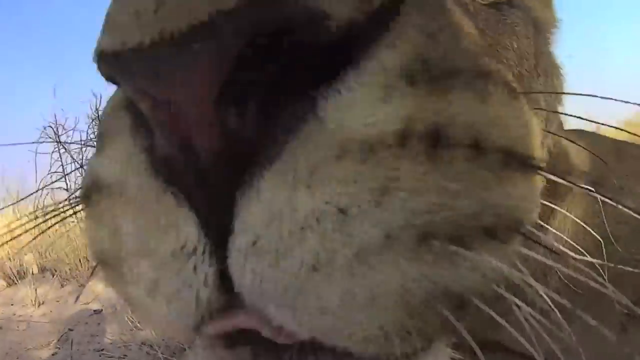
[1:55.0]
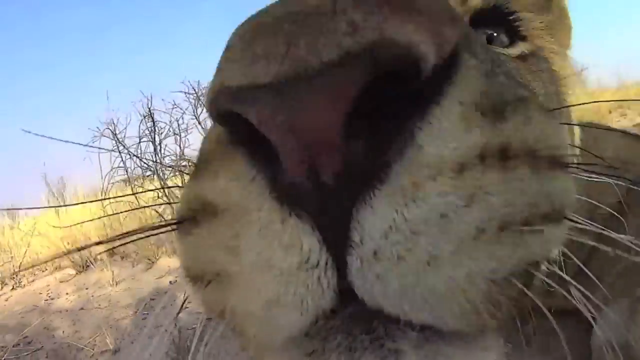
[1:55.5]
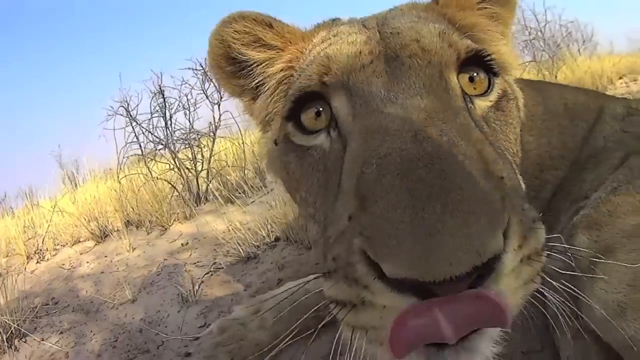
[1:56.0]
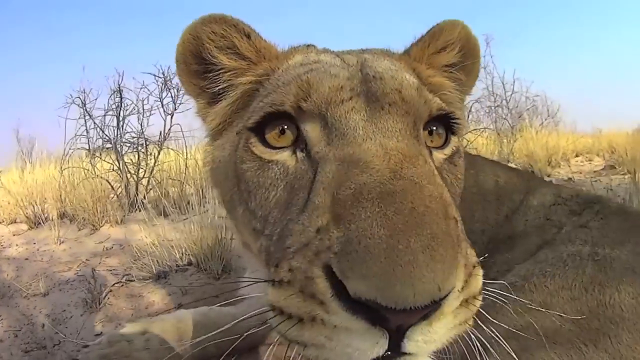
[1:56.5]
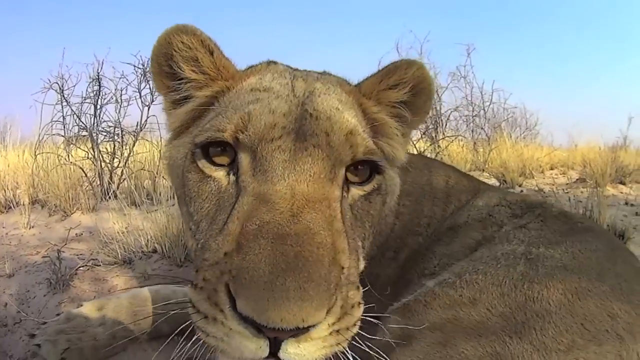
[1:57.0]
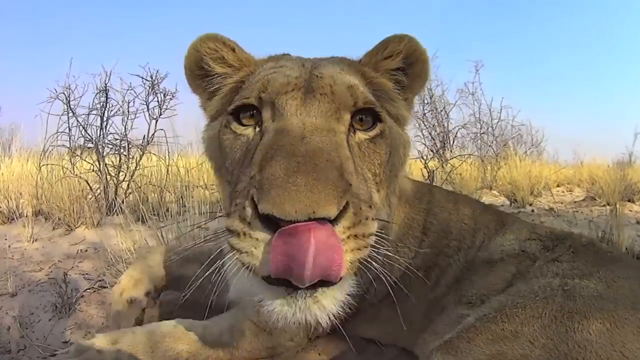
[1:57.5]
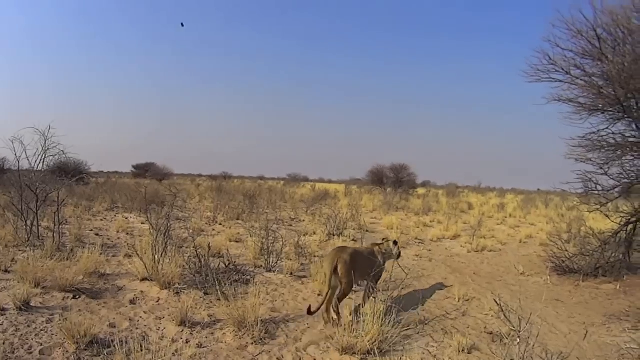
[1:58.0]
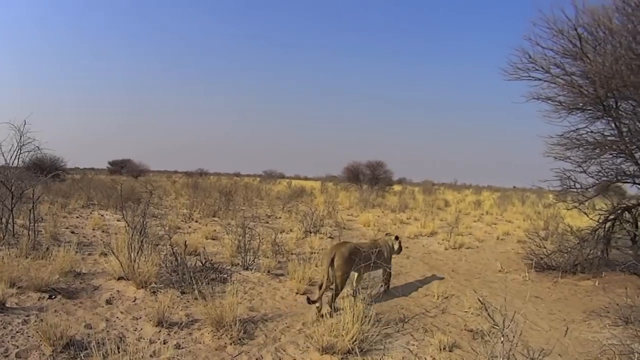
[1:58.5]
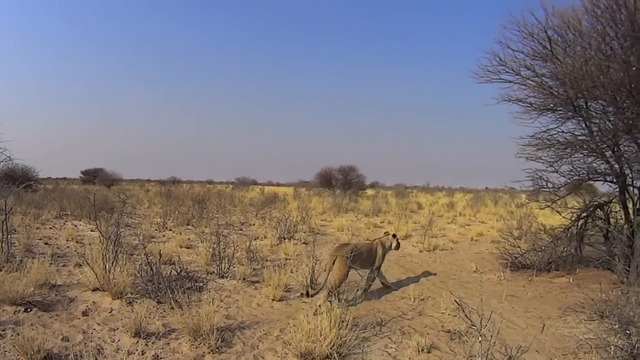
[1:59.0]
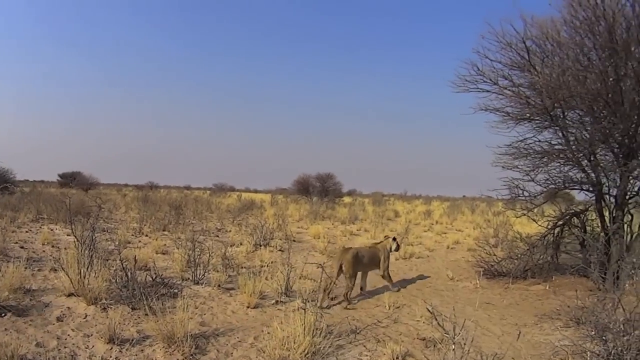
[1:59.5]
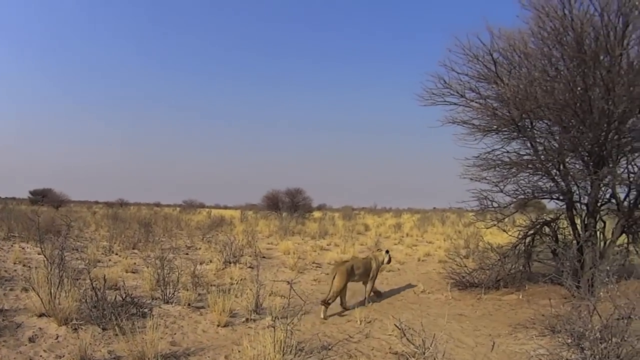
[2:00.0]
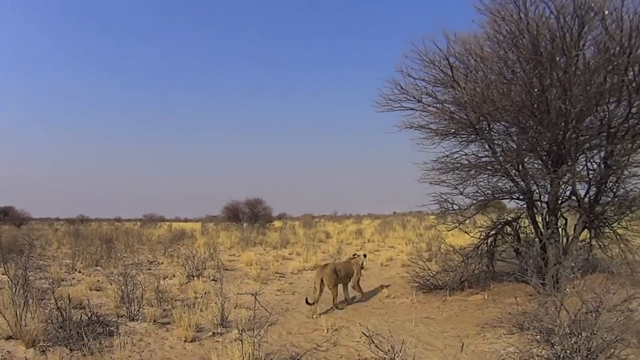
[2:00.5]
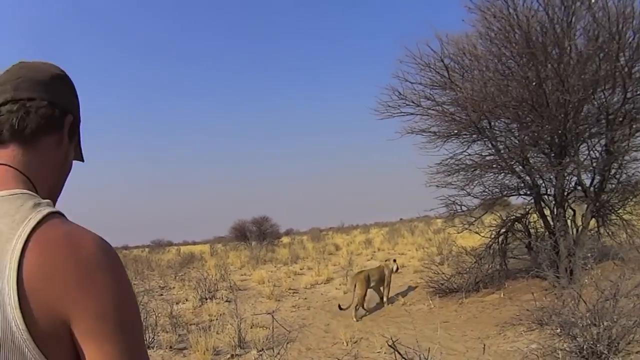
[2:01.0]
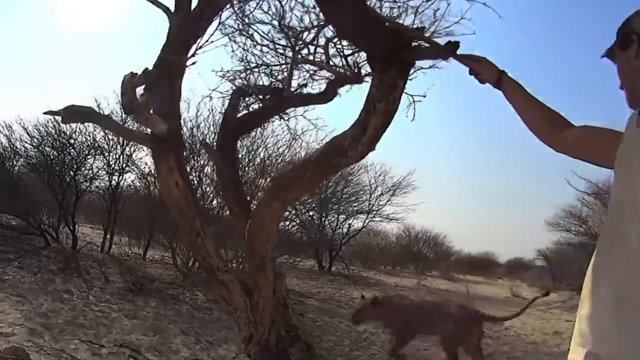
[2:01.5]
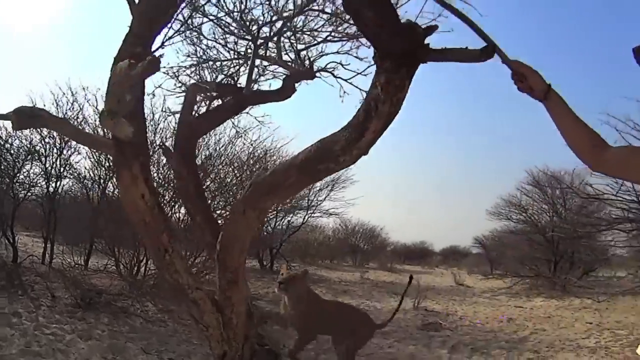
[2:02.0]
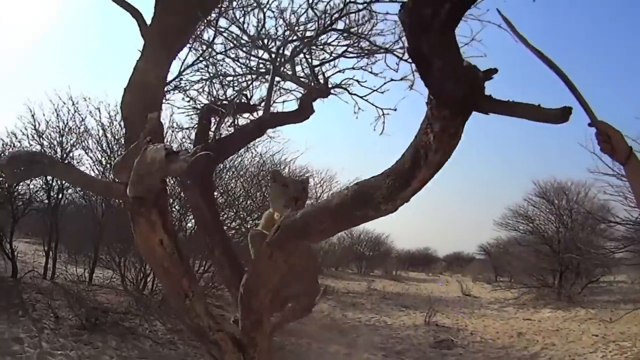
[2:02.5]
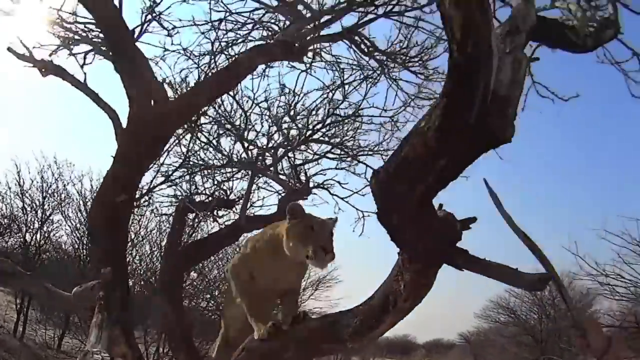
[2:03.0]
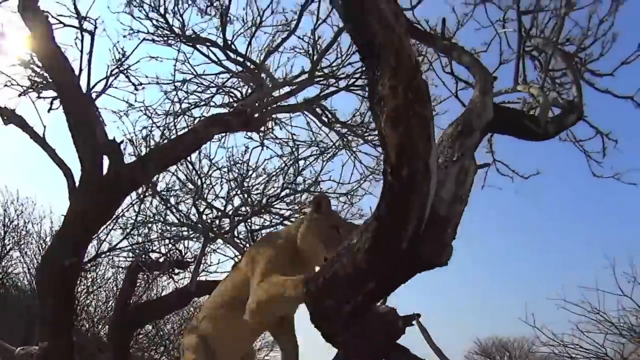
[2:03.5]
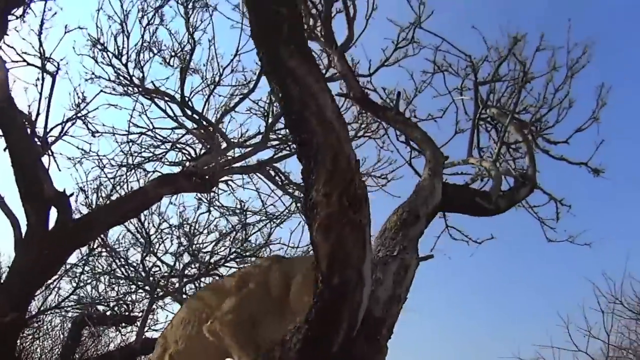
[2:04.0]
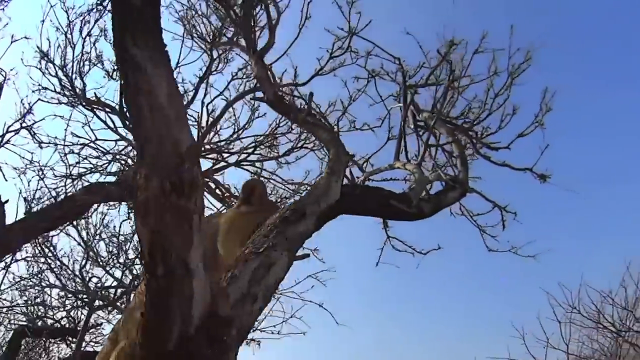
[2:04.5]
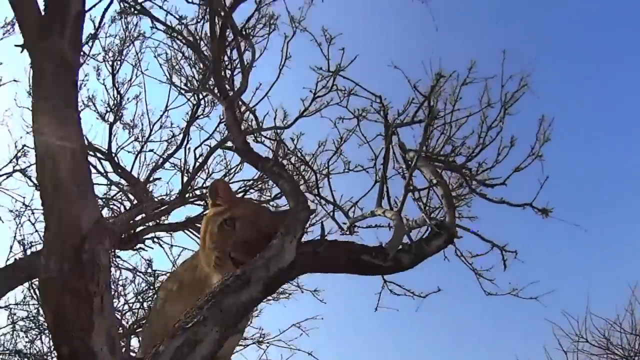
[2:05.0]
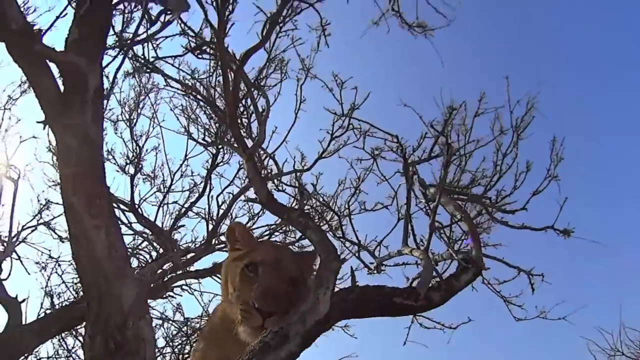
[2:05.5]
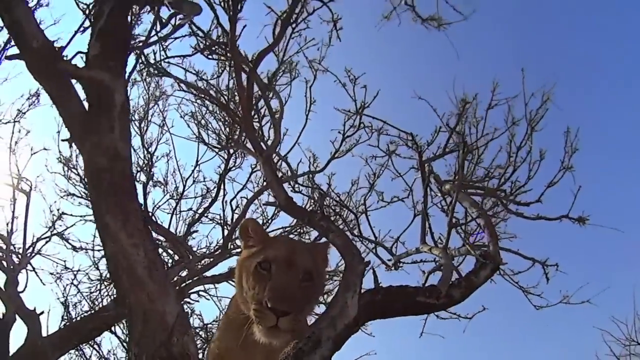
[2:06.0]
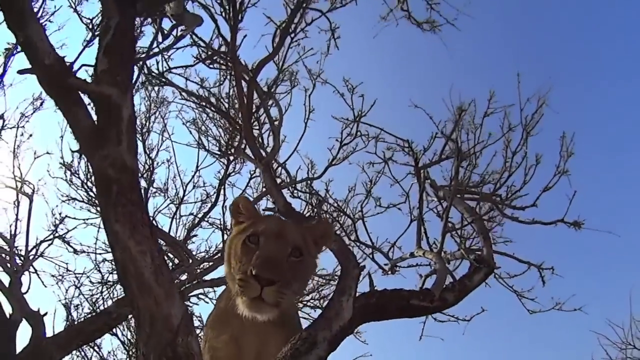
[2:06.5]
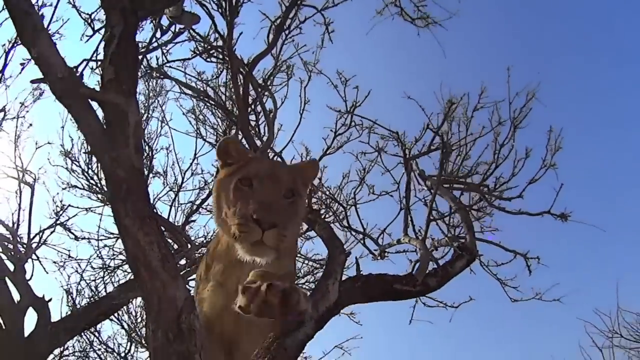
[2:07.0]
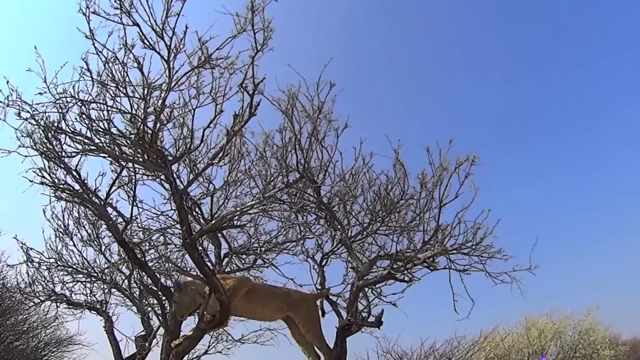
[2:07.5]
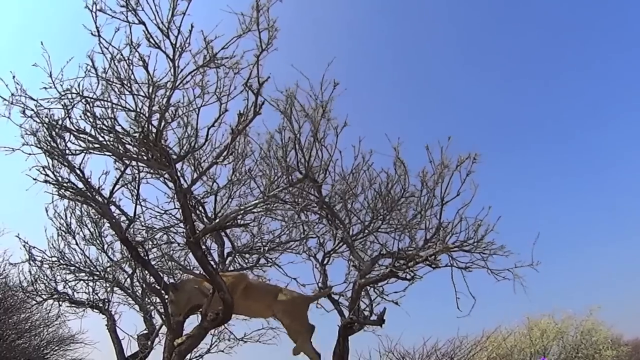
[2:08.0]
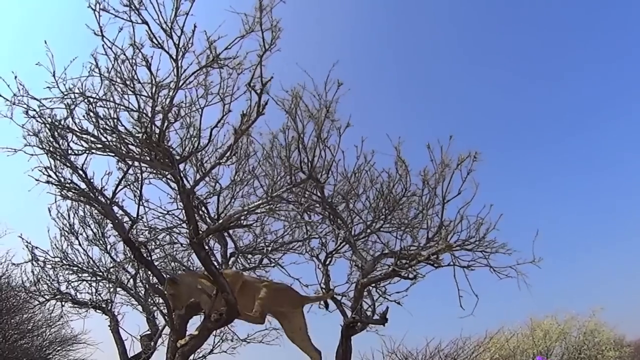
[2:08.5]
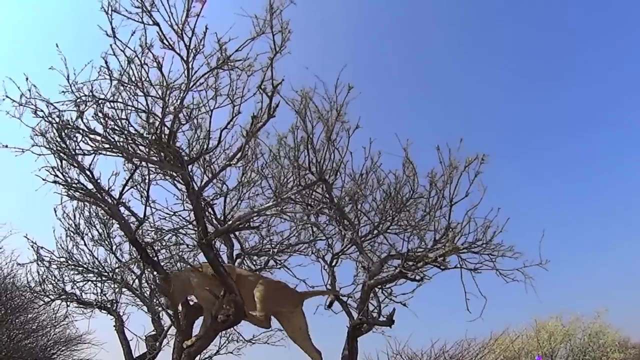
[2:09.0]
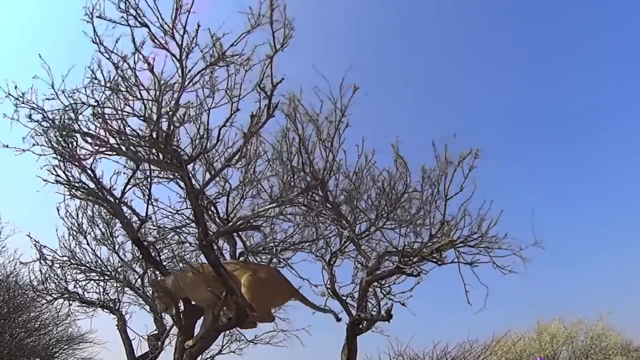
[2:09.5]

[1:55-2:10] The lion looks straight into the camera and licks its lips, then climbs a tree, carefully going from one branch to another so as not to fall. The man does not join it; instead he points his stick at the tree and stands below watching the lion. The tree is very bare and not very high, so it is easy for the lion to climb. It is daytime and clear, with a very blue sky and no white clouds.